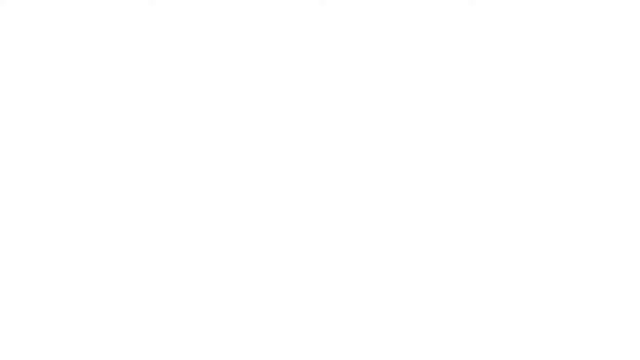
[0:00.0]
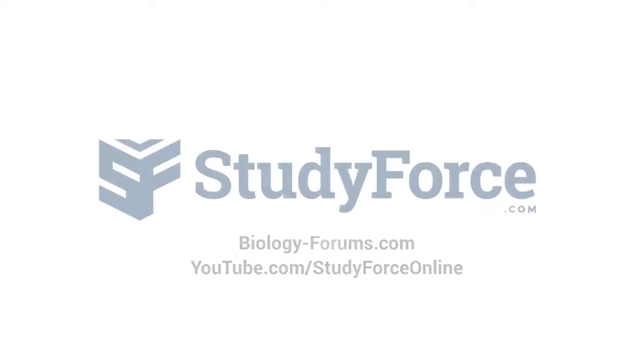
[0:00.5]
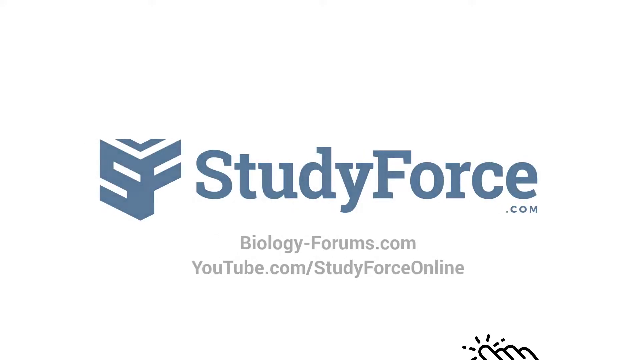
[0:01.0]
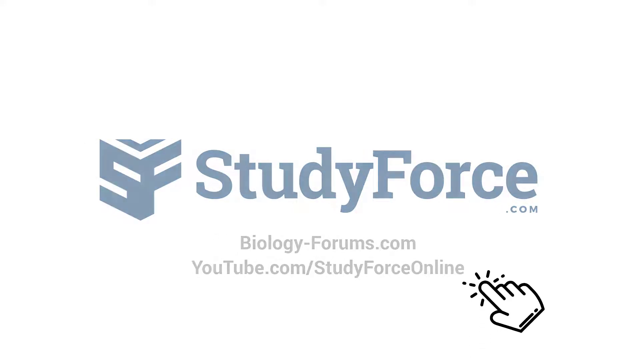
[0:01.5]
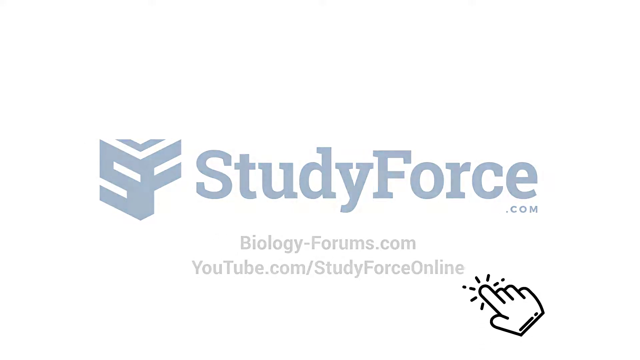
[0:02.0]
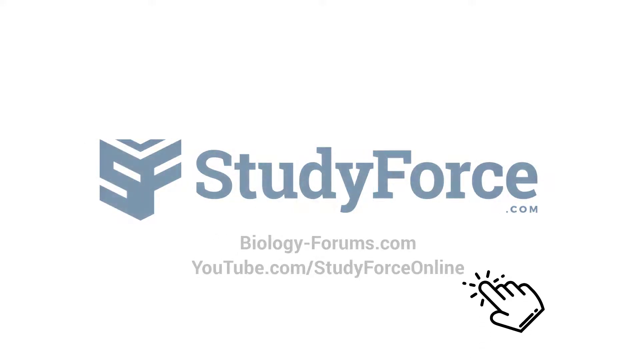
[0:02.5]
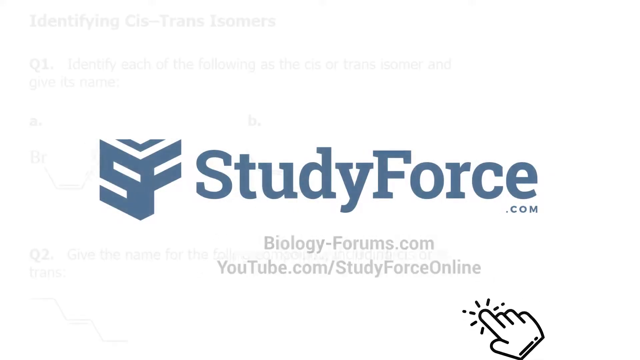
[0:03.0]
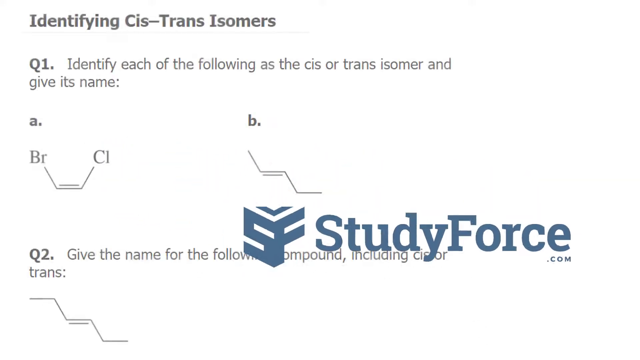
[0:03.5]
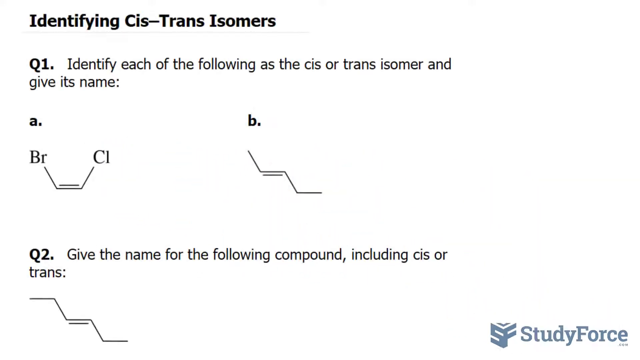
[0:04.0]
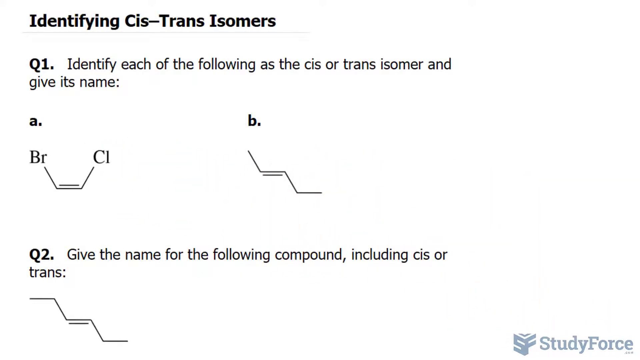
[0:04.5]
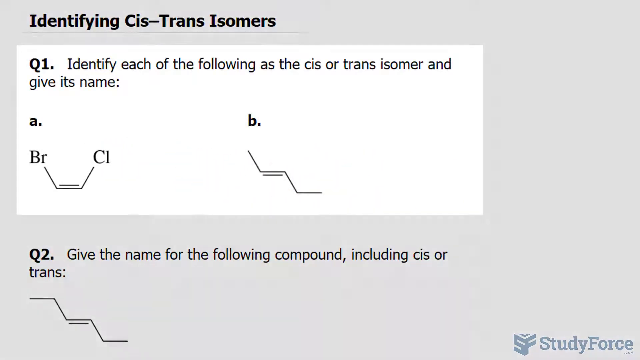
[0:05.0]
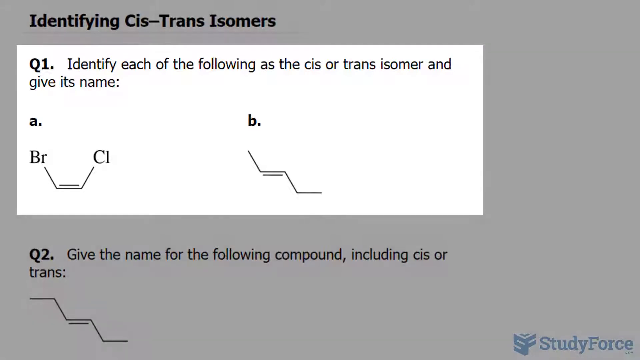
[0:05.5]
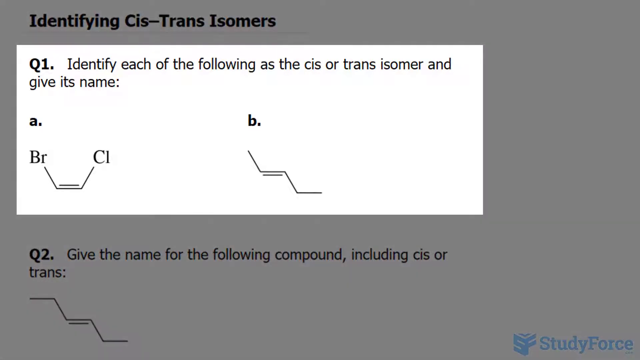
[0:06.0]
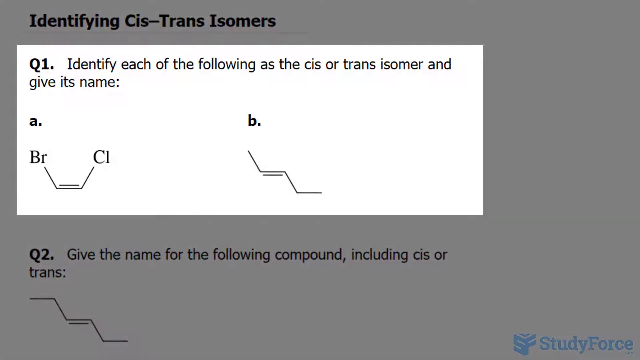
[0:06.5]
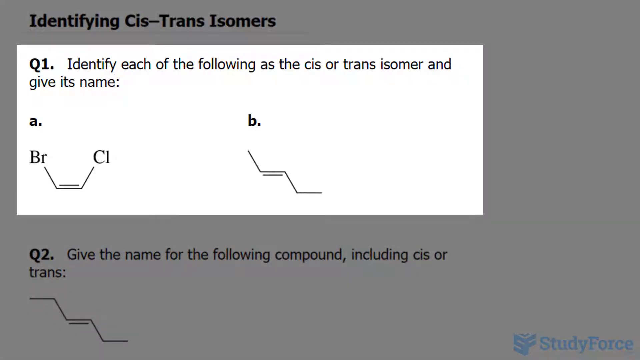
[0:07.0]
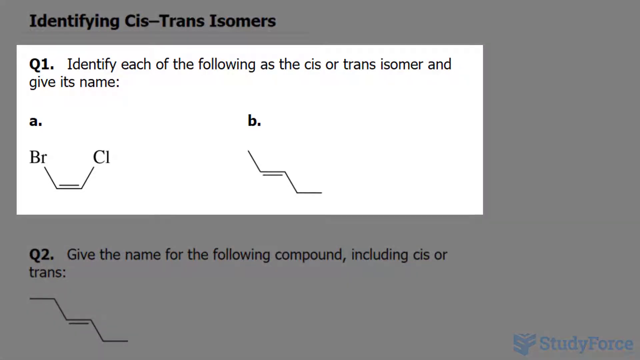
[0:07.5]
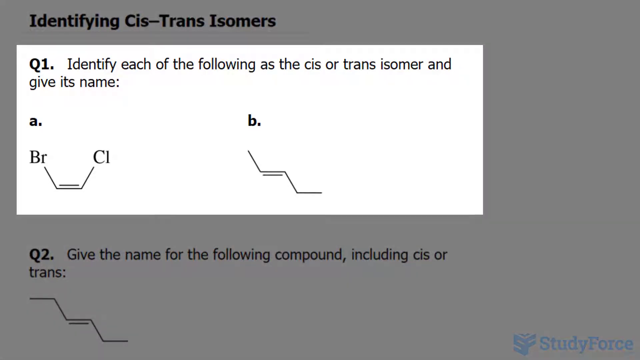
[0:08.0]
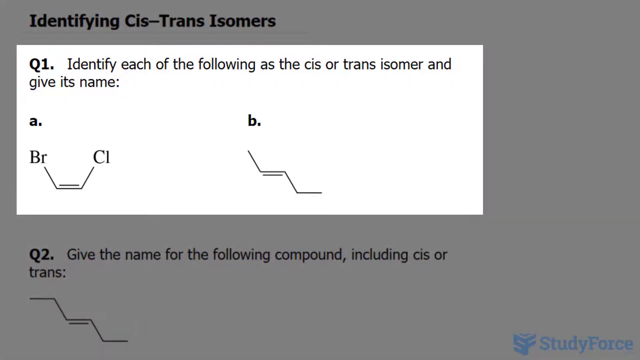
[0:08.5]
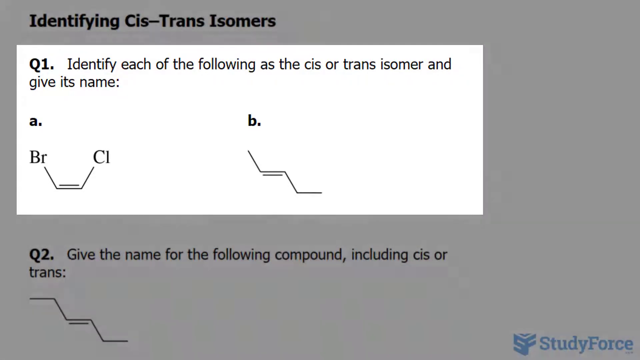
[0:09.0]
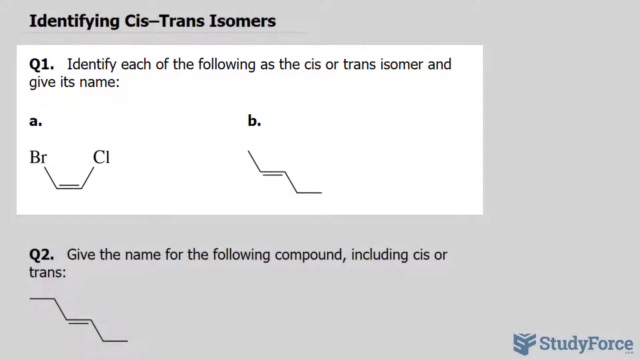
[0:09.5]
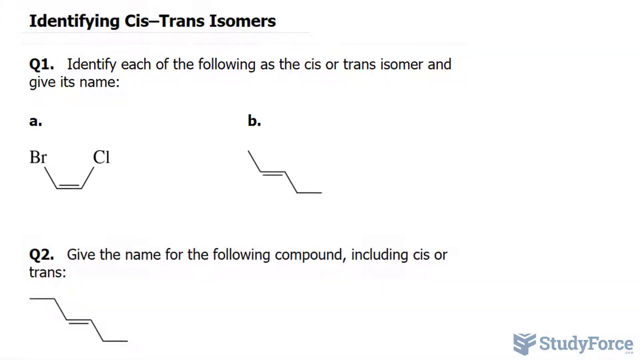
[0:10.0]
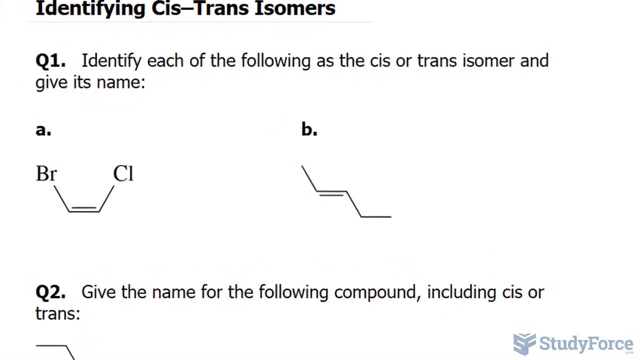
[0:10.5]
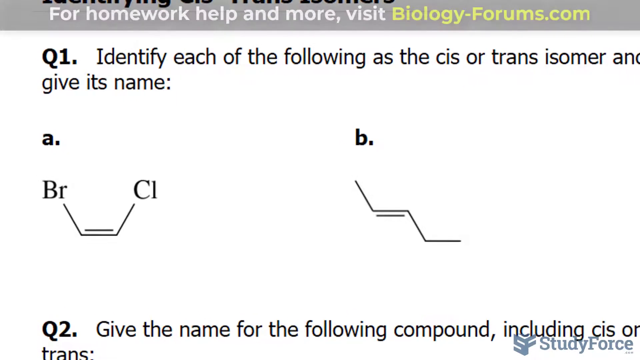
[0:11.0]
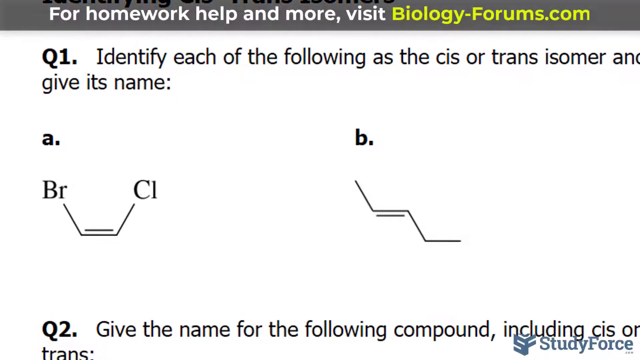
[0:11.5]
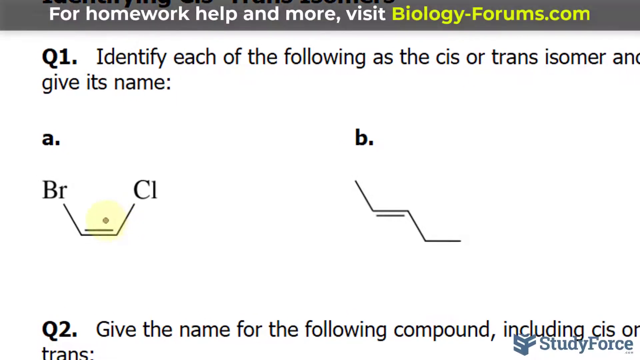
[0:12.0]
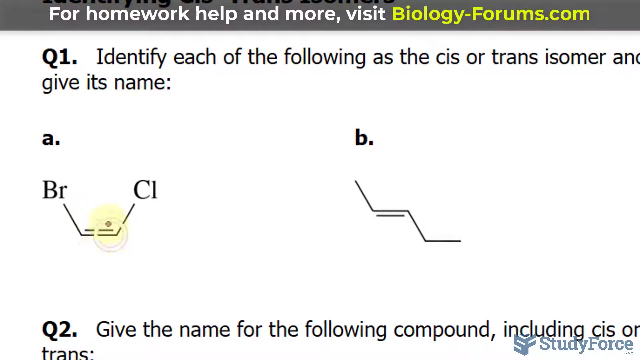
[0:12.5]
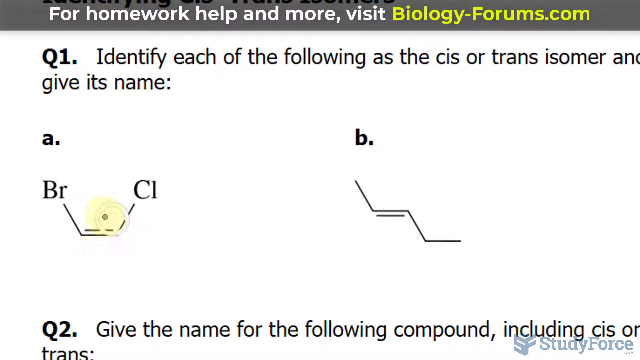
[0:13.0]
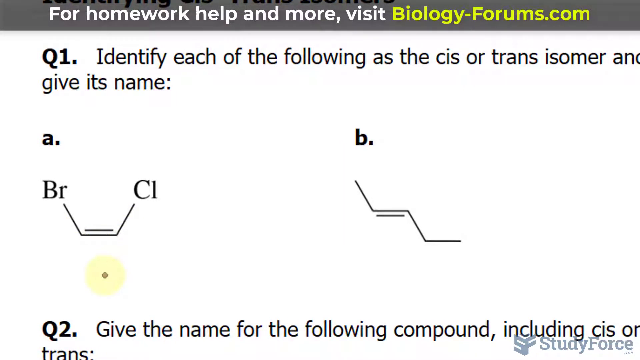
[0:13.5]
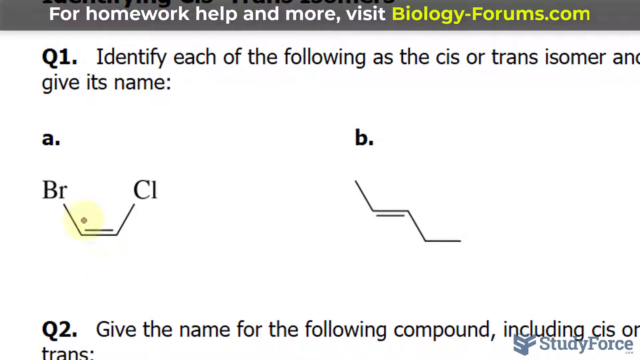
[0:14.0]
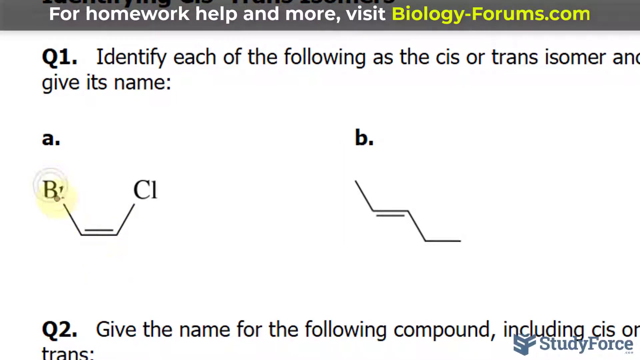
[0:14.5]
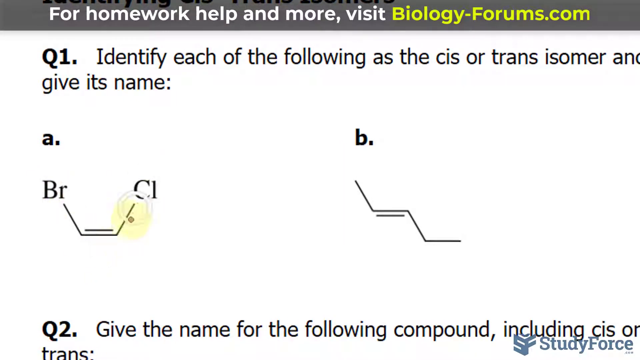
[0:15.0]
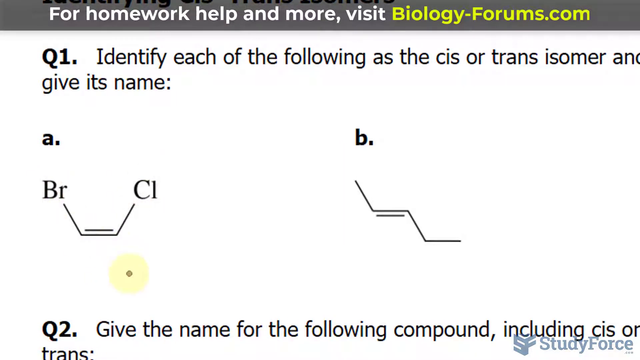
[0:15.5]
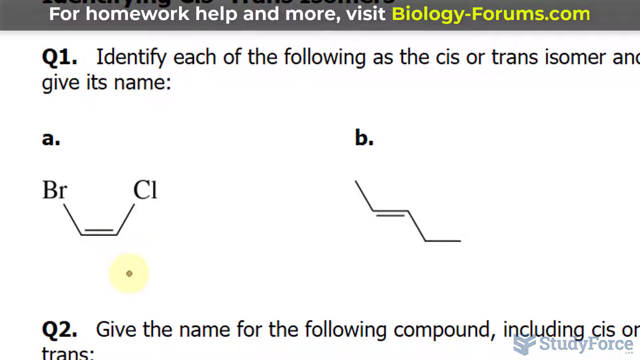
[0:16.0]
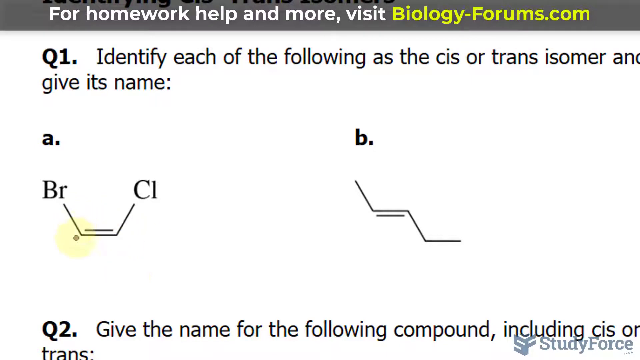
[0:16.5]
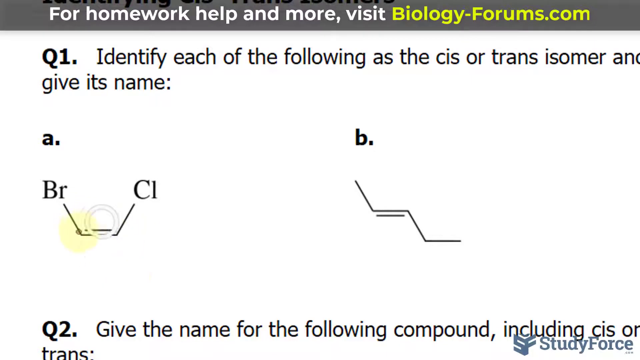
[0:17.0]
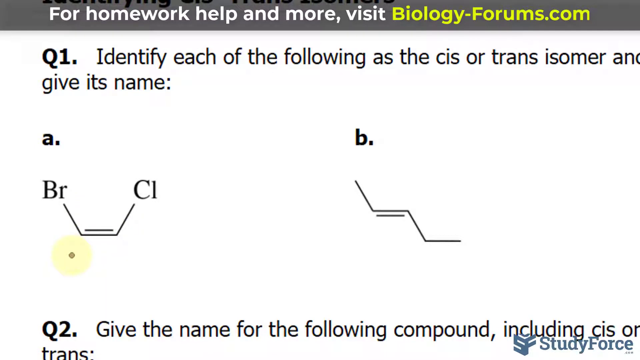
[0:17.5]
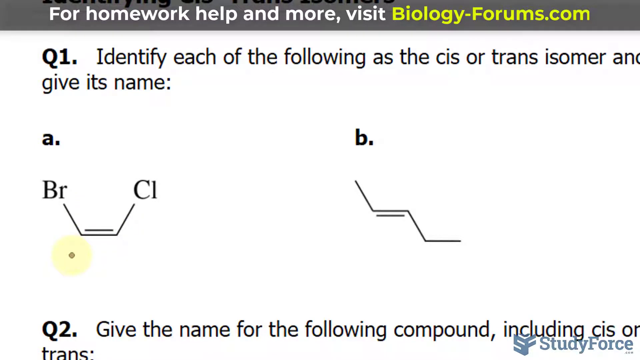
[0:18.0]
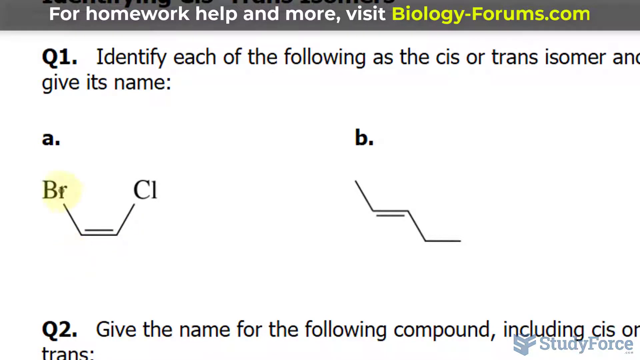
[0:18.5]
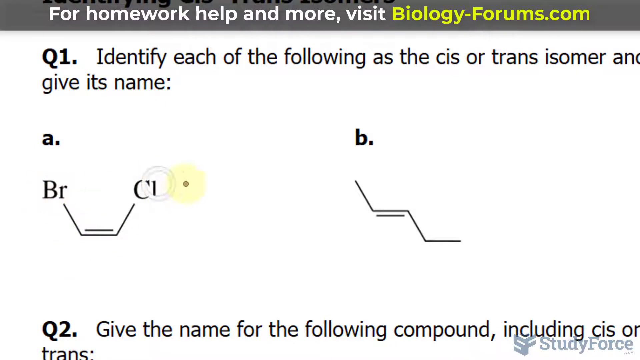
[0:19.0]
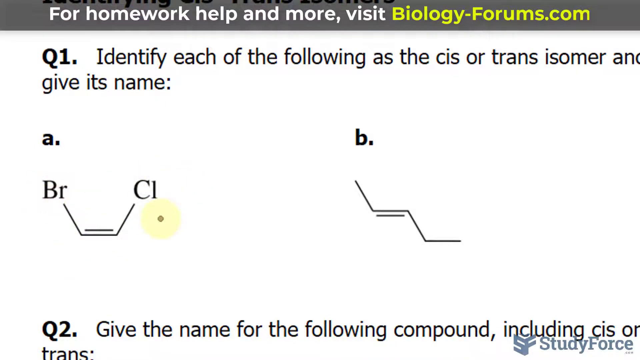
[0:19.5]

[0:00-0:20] The video opens with a blue logo in the center of the screen, and next to it, also in the center of the frame, the blue writing "studyforce.com" appears. In the lower part of the frame there is other writing in a different font and color, smaller than the title in the center. After that, what seem to be chemistry exercises are shown: a question number 1 is placed at the top, immediately followed by two answer options, A and B, each corresponding to a different molecule. The title of the topic is at the top left. The font in this part of the page is black and rather small. At one point the cursor moves near the first molecule.